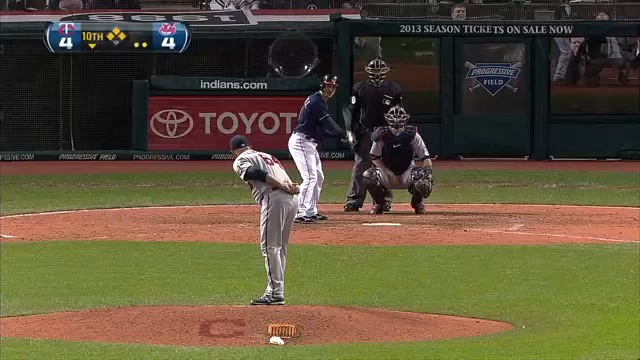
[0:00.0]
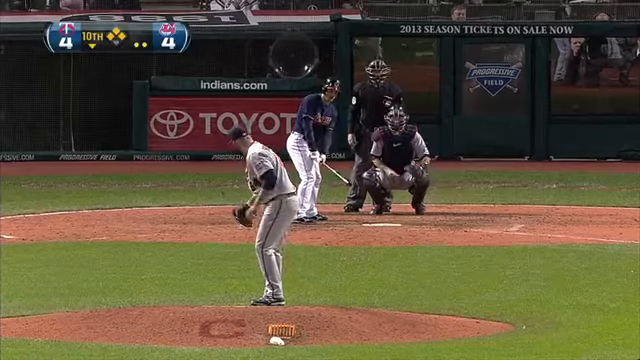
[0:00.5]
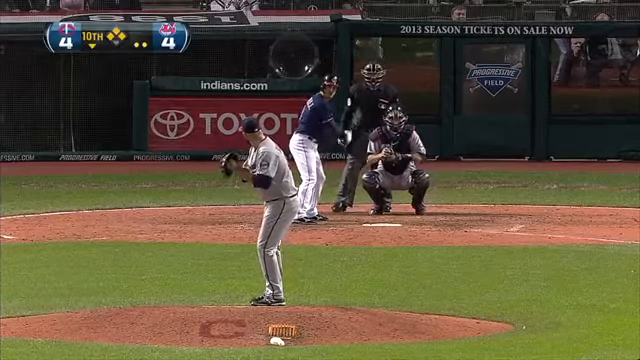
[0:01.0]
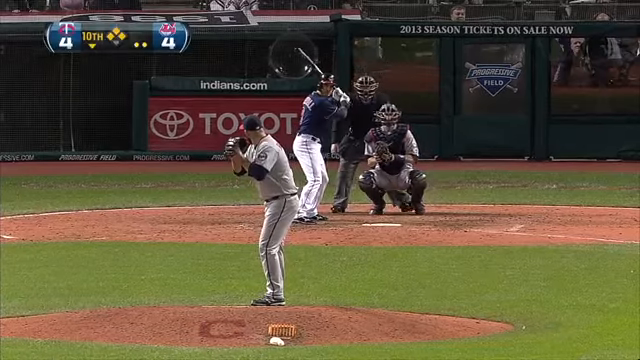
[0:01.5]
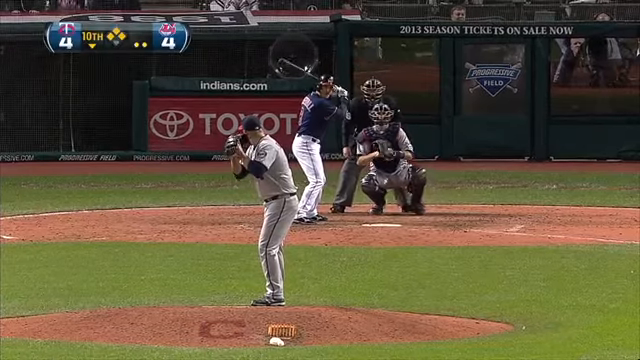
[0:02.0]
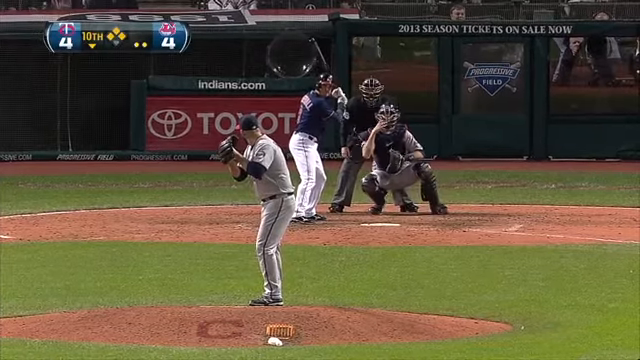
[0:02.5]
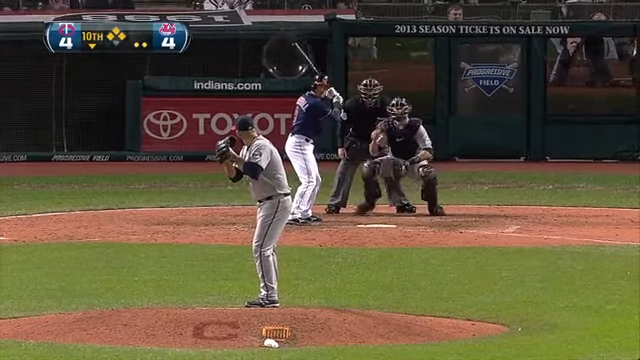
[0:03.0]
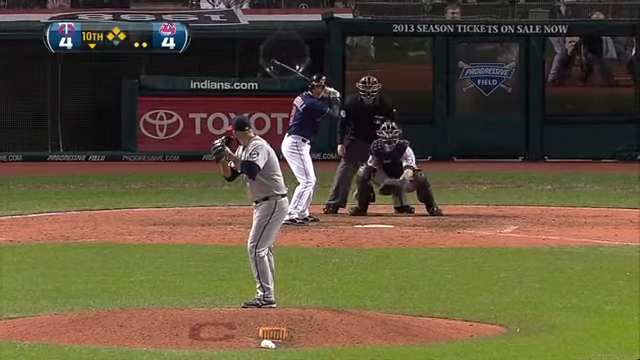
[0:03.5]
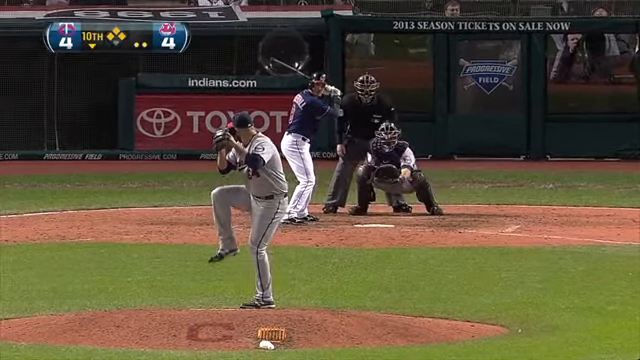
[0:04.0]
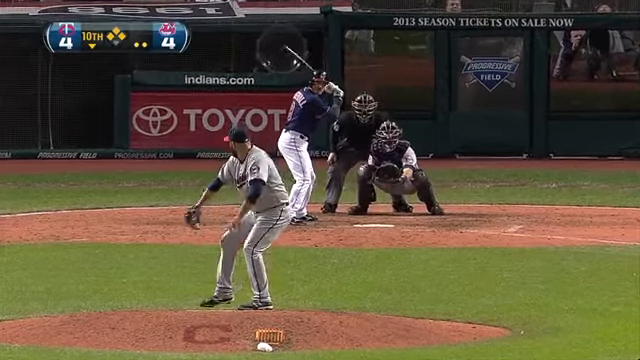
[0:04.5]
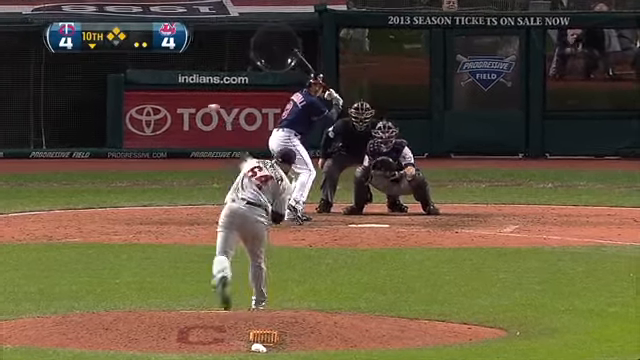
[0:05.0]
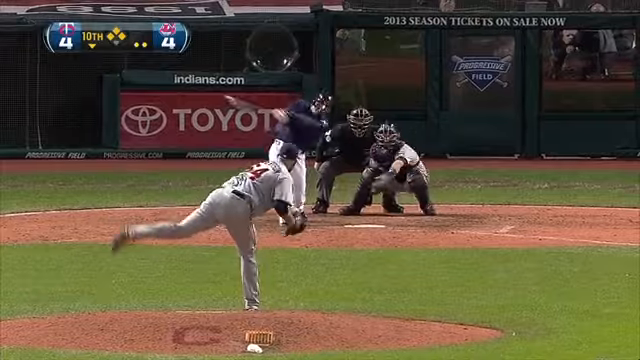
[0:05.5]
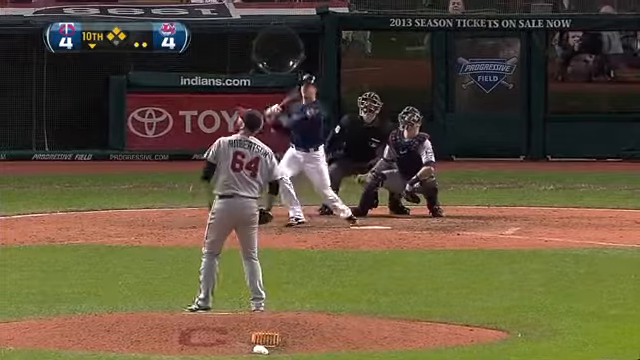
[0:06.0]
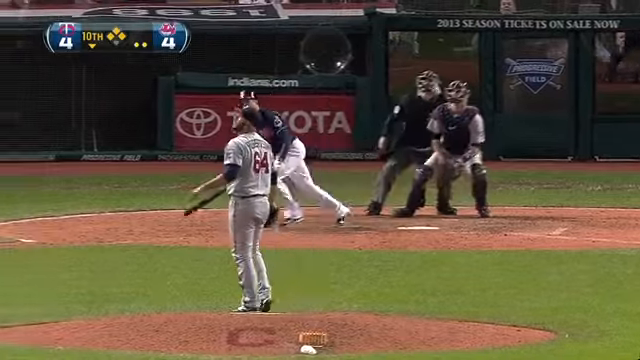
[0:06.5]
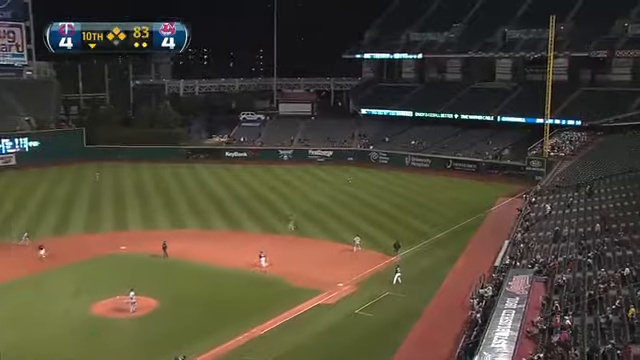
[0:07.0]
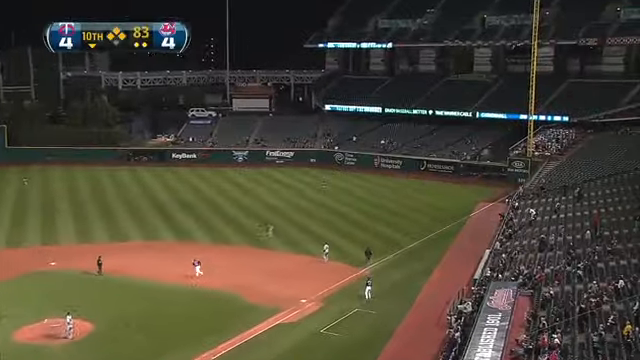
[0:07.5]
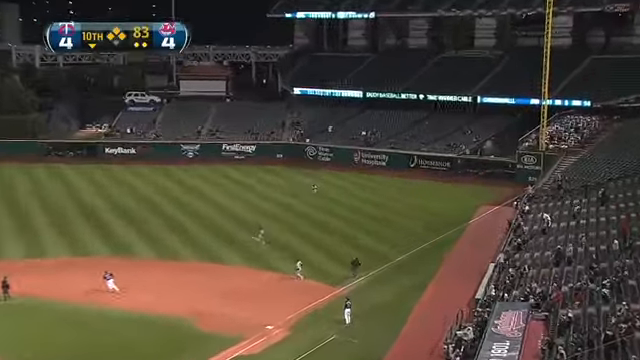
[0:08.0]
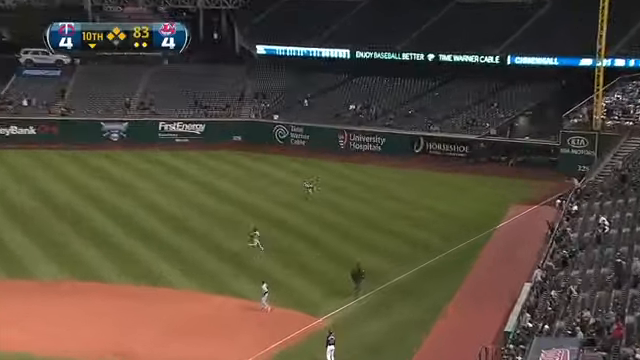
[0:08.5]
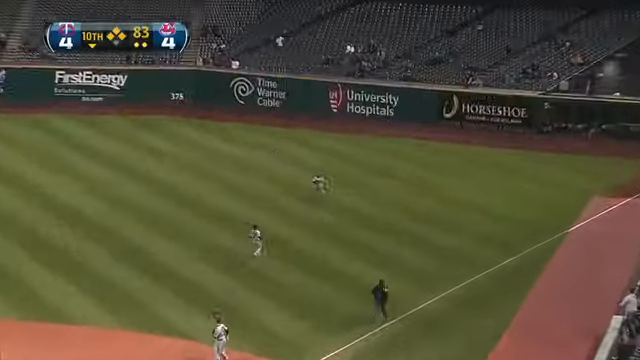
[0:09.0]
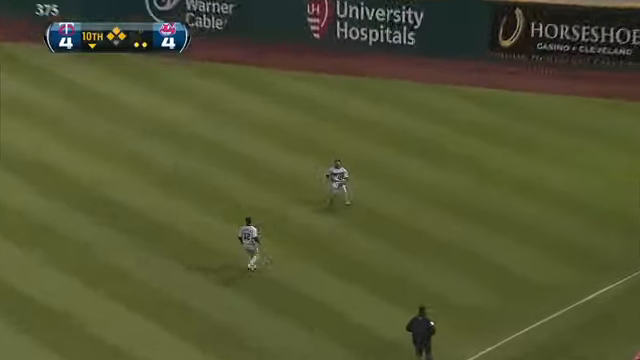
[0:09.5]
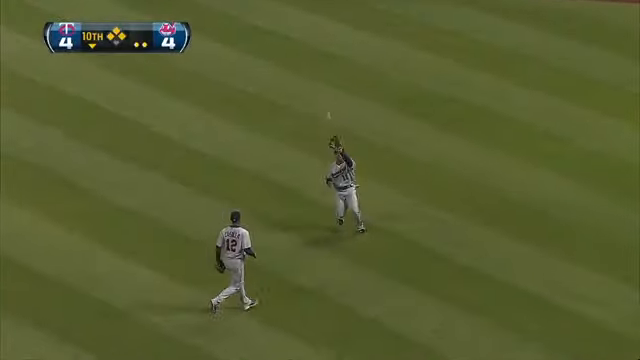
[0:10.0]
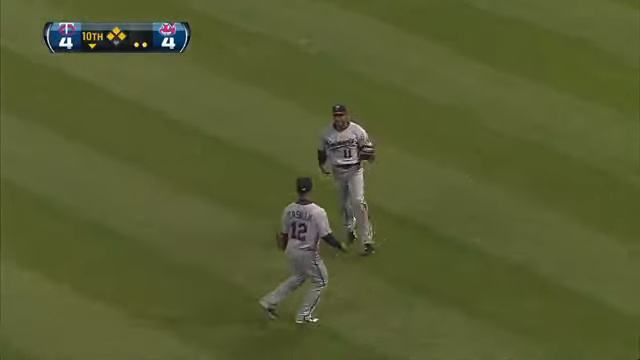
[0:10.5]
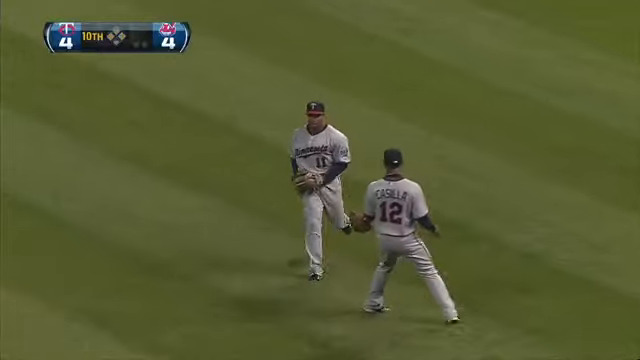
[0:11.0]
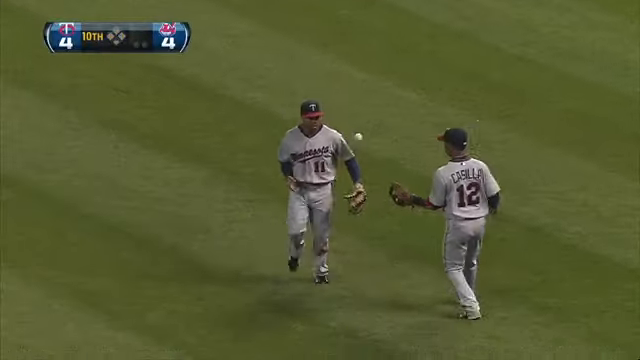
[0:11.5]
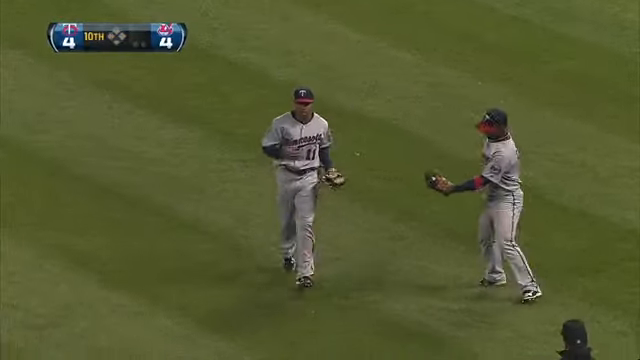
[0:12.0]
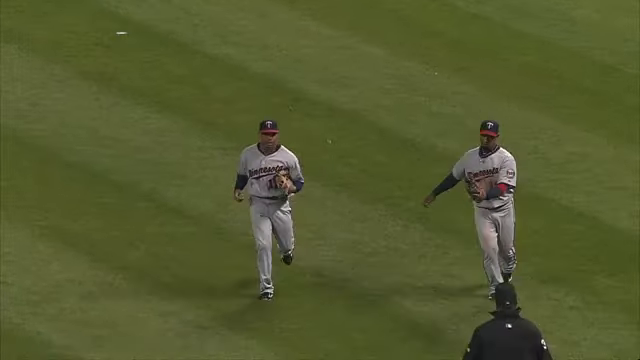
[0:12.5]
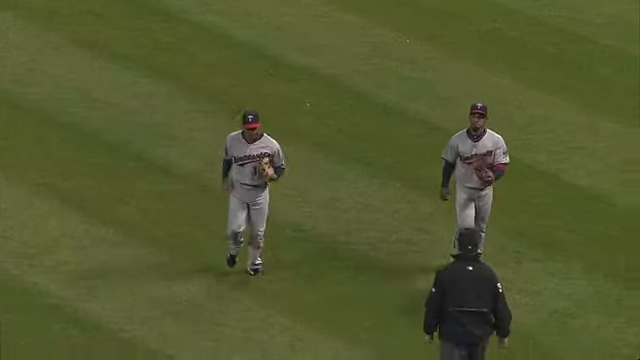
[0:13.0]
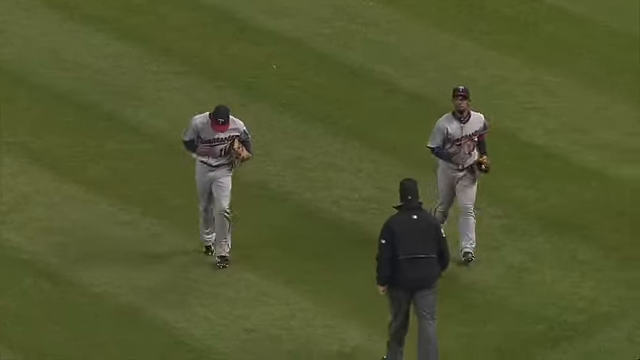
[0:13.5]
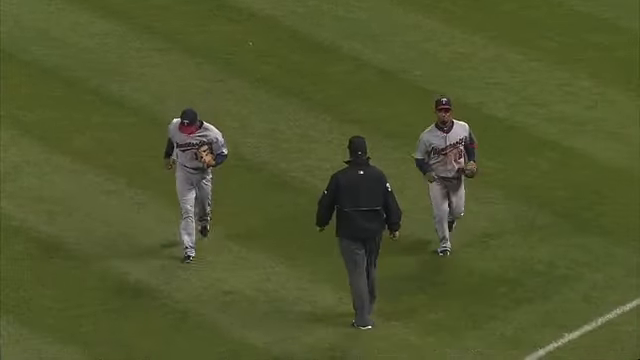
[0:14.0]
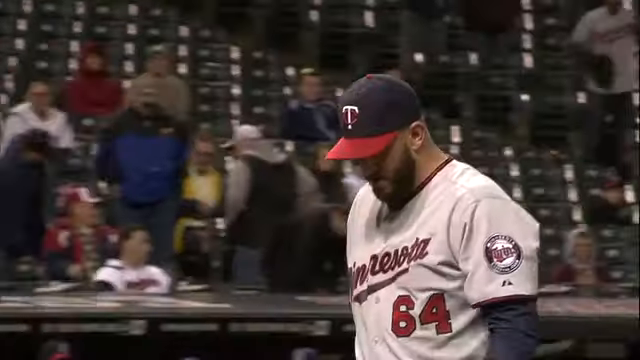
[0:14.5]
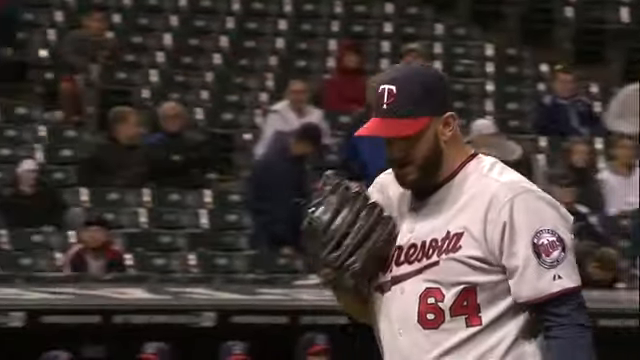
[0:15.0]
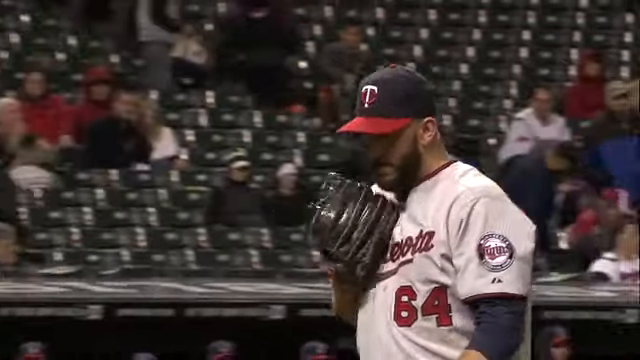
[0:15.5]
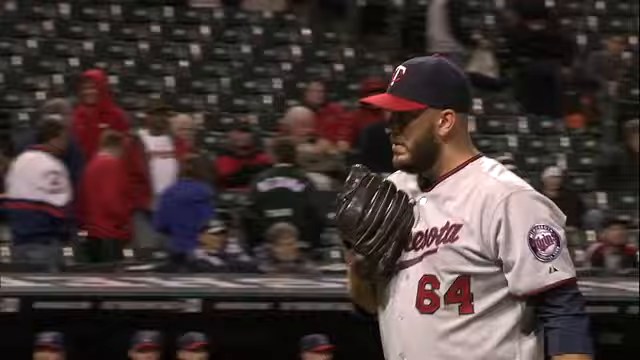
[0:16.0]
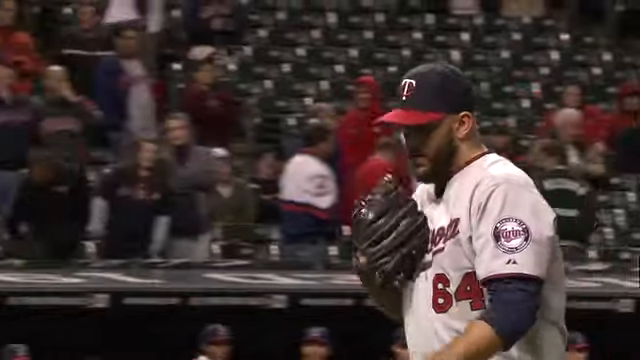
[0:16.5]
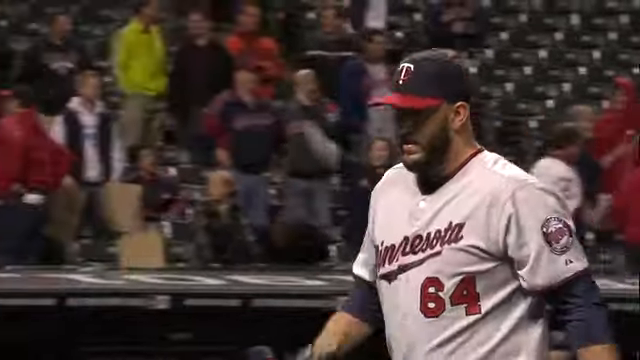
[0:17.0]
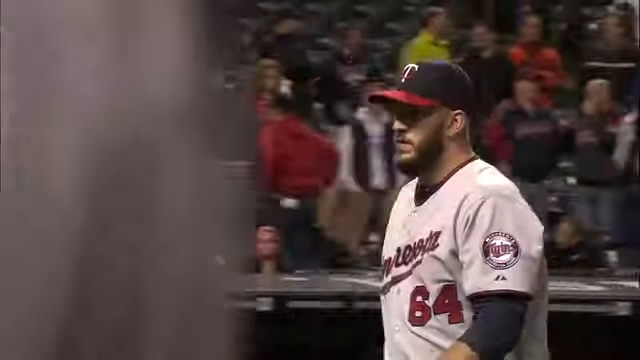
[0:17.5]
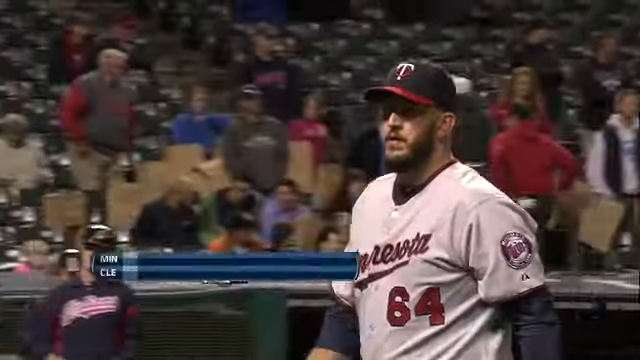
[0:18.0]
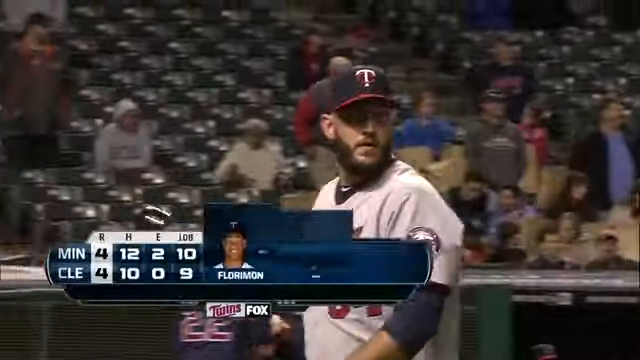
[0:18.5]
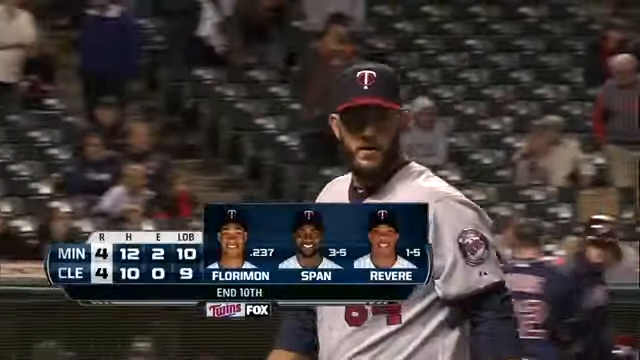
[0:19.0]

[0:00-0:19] A baseball game is underway. A pitcher on the mound wears a grayish uniform, and a batter at the plate wears a whitish uniform with blue trim. The pitcher goes into the windup and throws the pitch, and the hitter swings and hits a long fly out to right field. A catcher wears a blue chest protector, and behind the catcher is the home plate umpire in a gray and black uniform with a black mask. On the backstop there is a red logo that says "Toyota", and the backstop also shows 2013 season tickets on sale. The game appears to be the Minnesota Twins versus the Cleveland Indians. The stadium looks very empty, with only a few people here and there. The field is well maintained and well manicured, with white lines for the base paths, and in the very back there are many advertising logos on the back wall of the field.